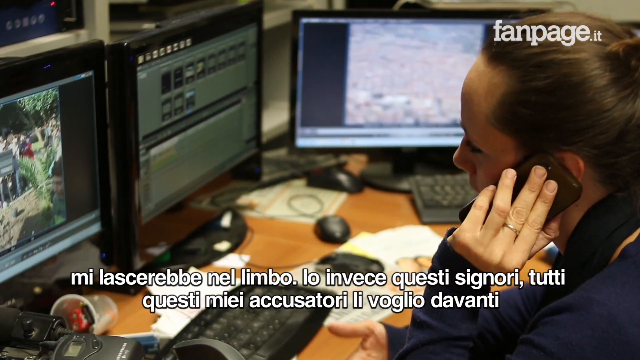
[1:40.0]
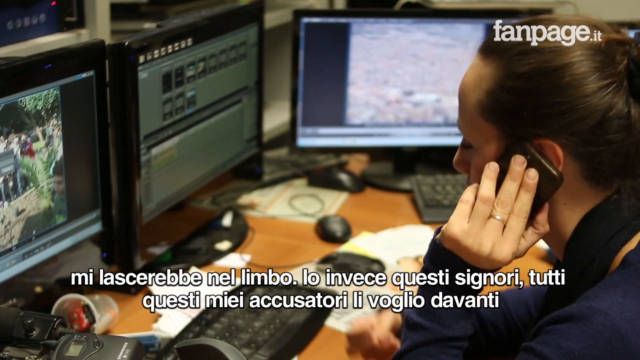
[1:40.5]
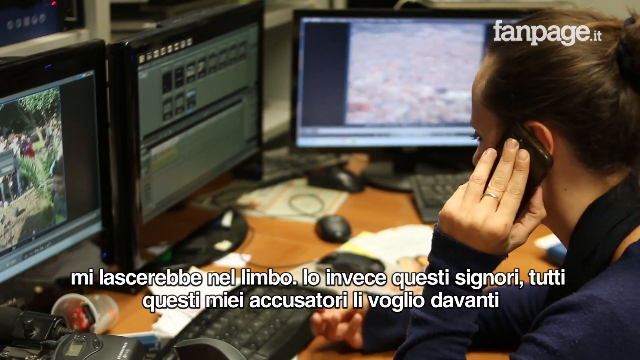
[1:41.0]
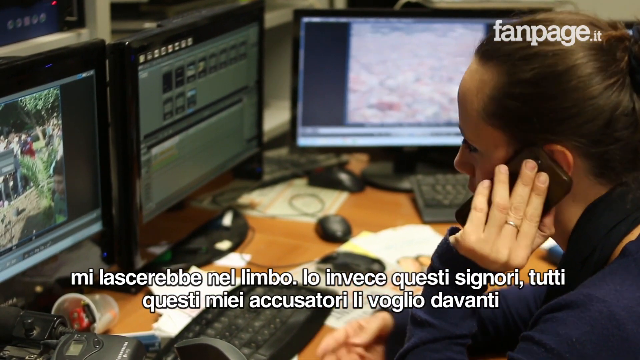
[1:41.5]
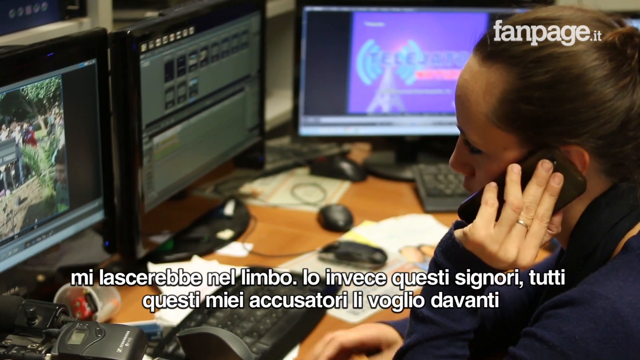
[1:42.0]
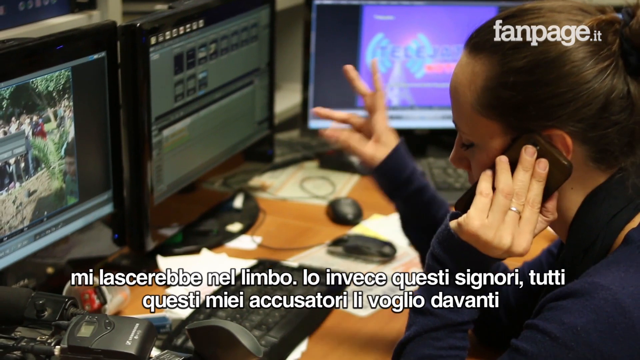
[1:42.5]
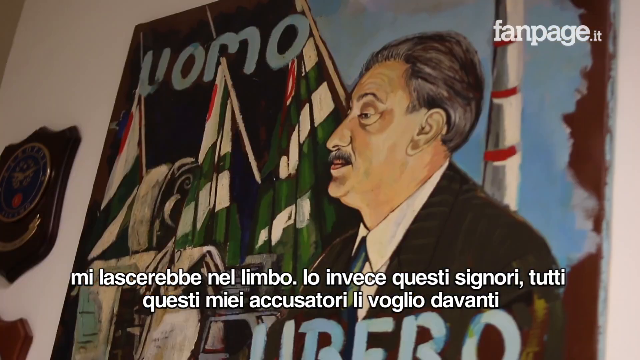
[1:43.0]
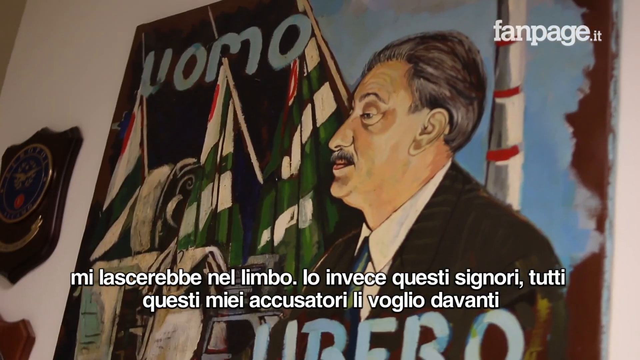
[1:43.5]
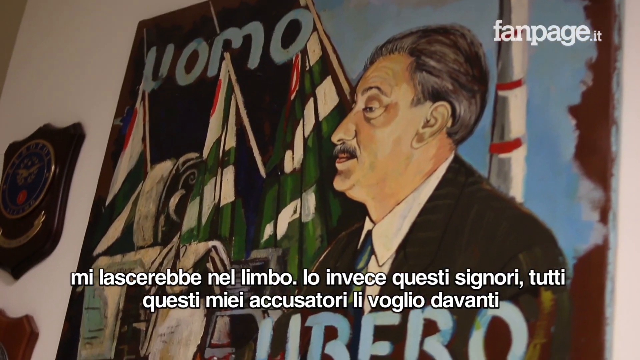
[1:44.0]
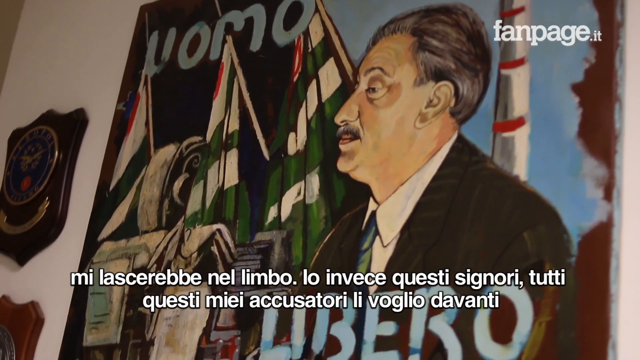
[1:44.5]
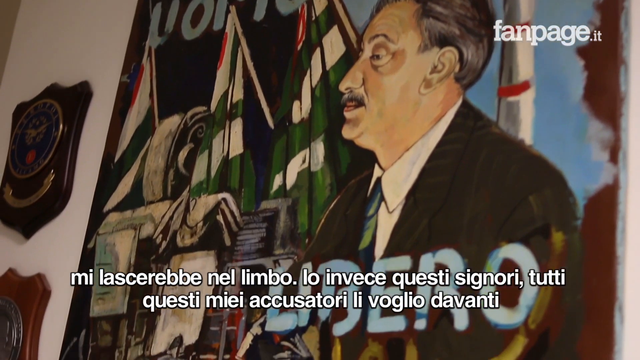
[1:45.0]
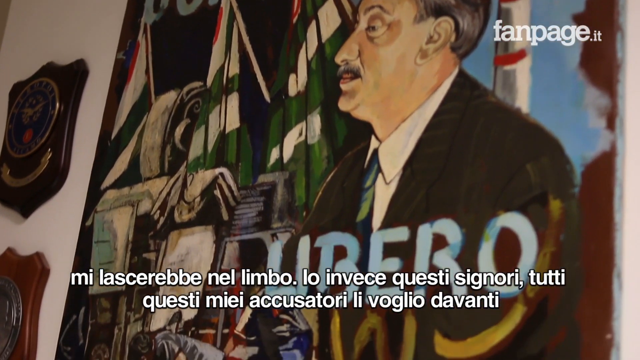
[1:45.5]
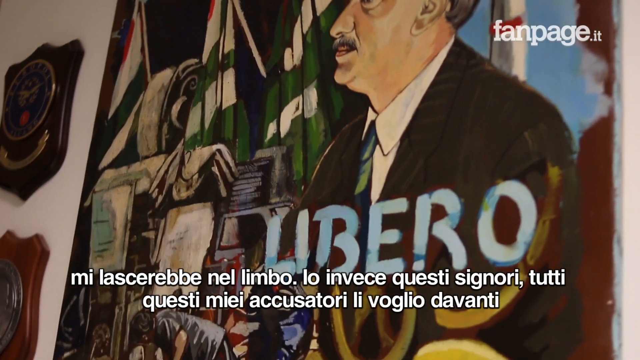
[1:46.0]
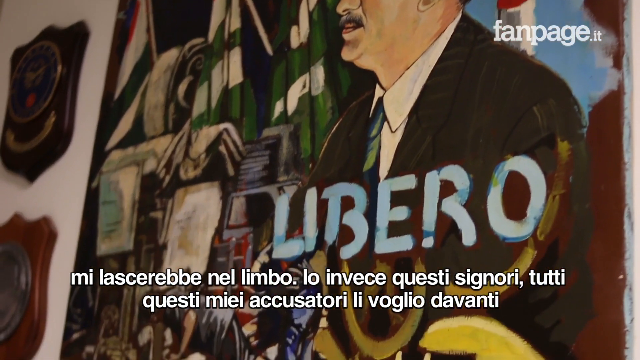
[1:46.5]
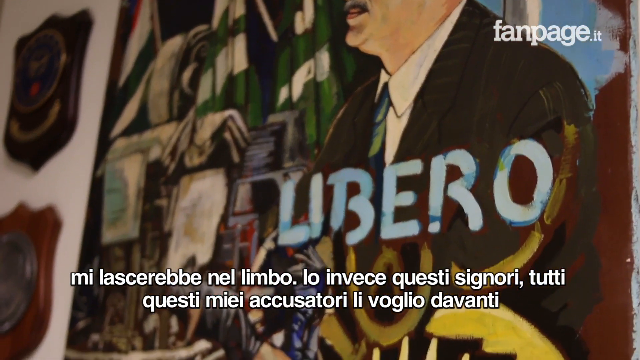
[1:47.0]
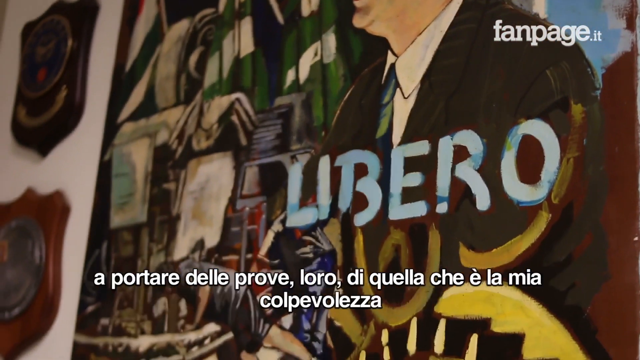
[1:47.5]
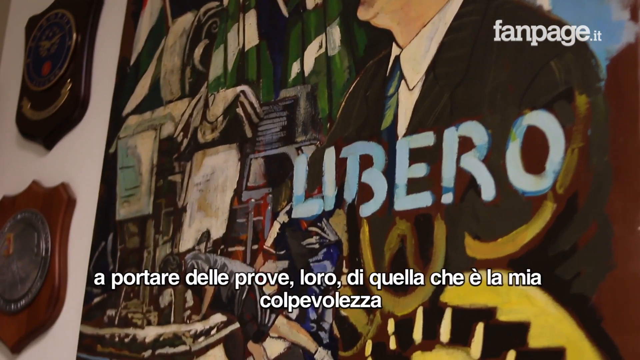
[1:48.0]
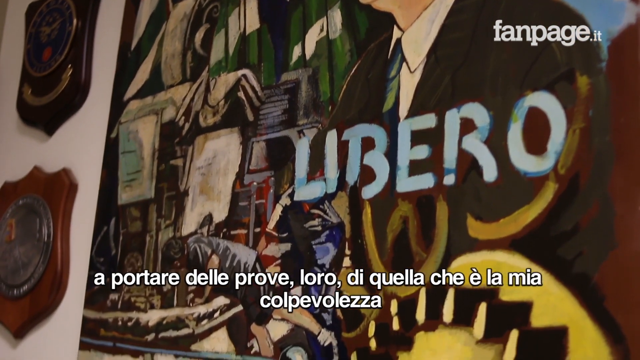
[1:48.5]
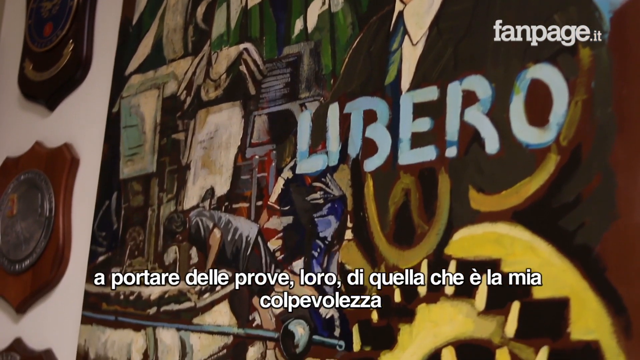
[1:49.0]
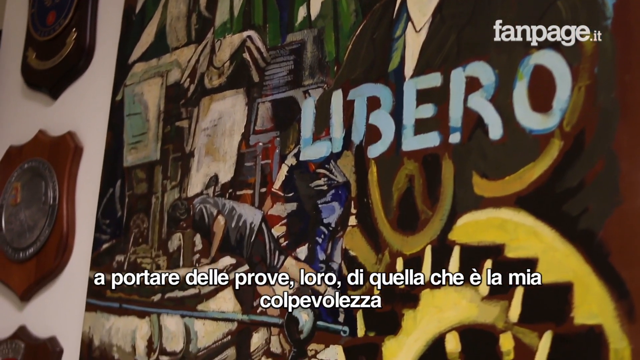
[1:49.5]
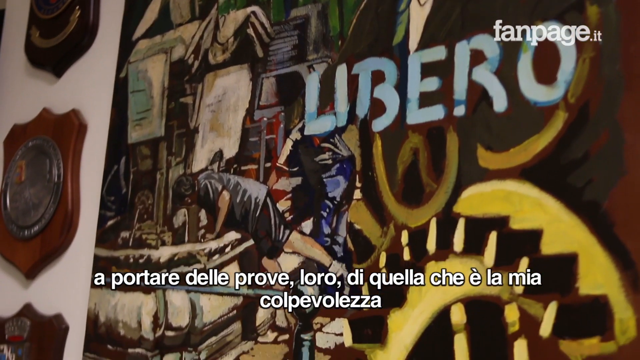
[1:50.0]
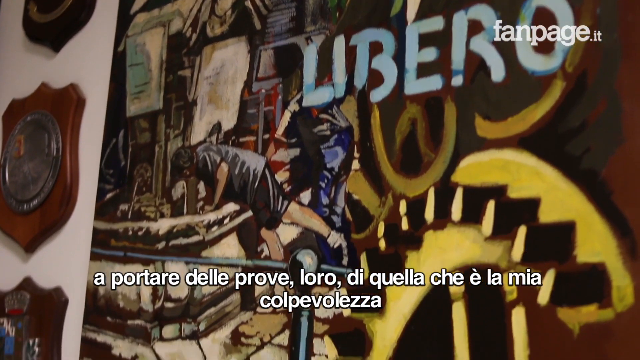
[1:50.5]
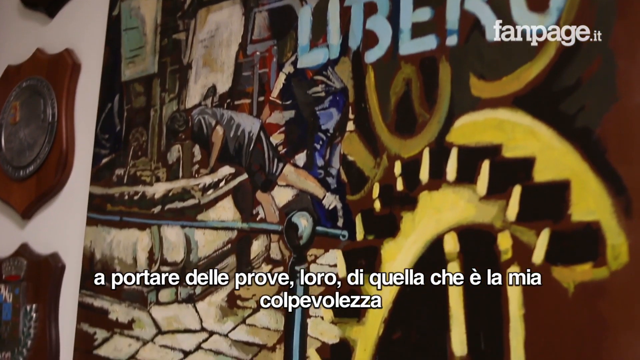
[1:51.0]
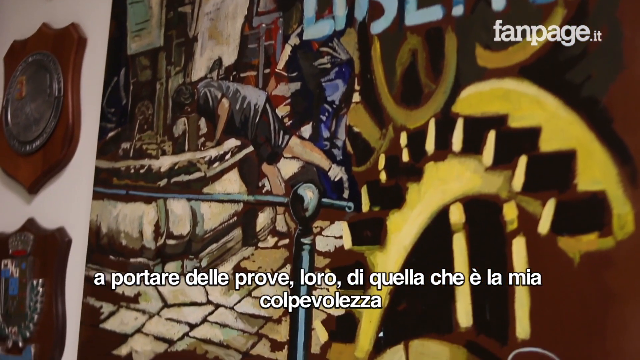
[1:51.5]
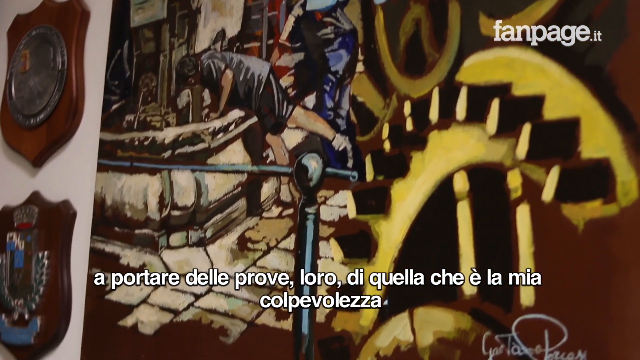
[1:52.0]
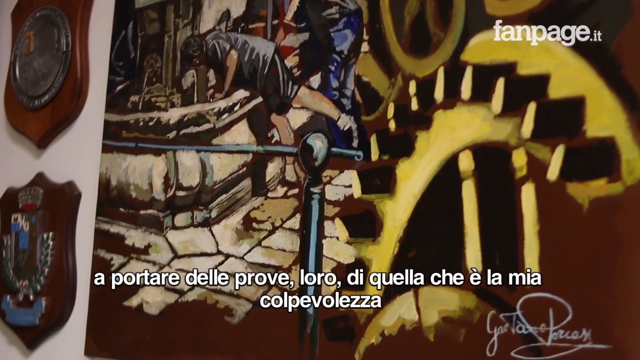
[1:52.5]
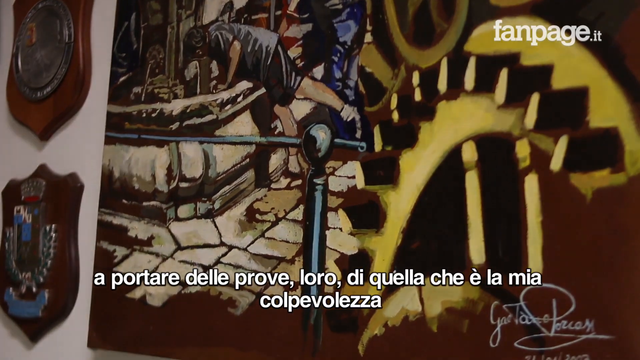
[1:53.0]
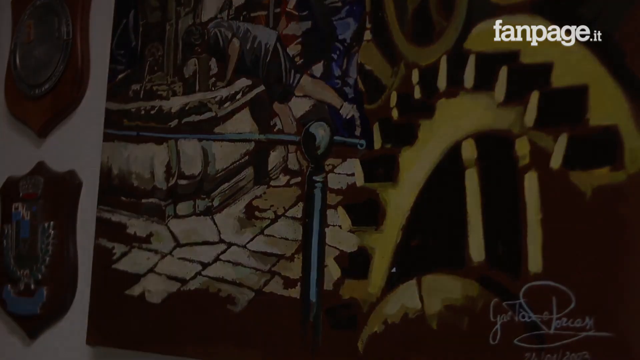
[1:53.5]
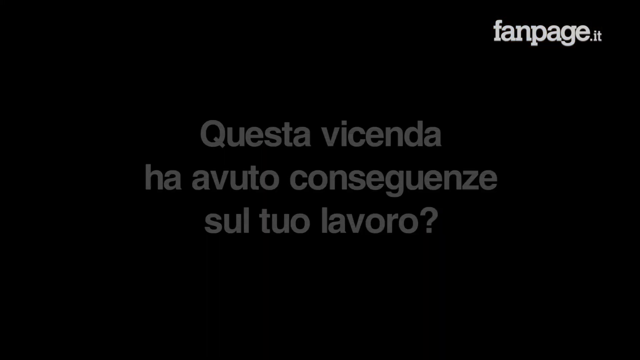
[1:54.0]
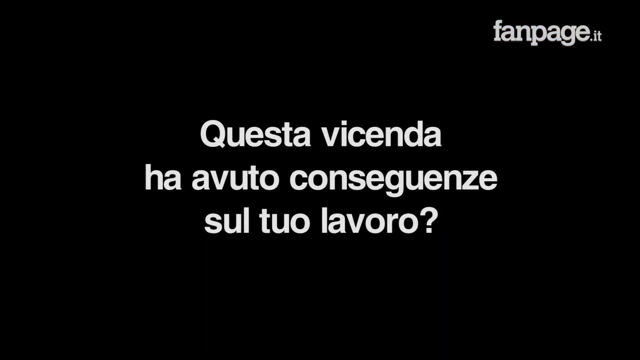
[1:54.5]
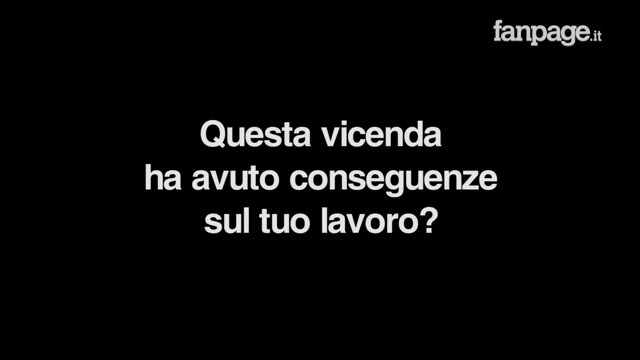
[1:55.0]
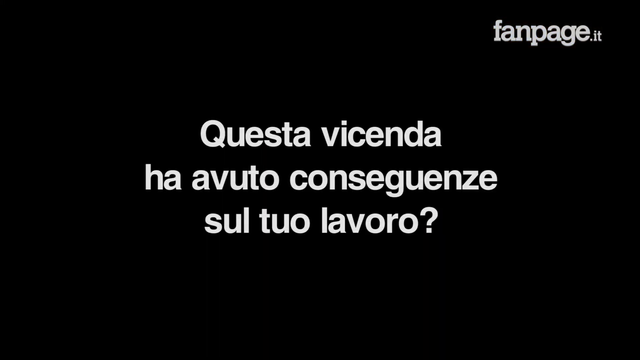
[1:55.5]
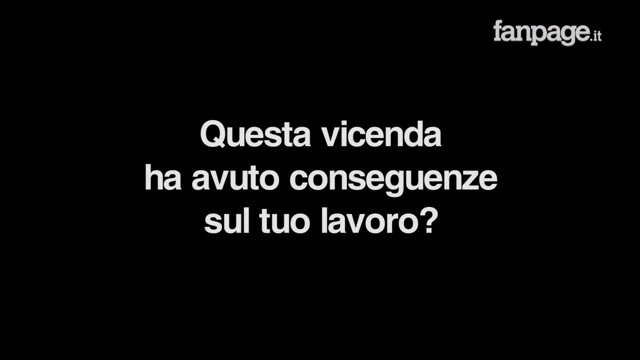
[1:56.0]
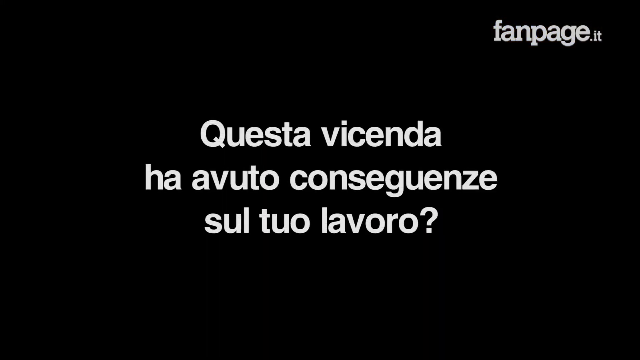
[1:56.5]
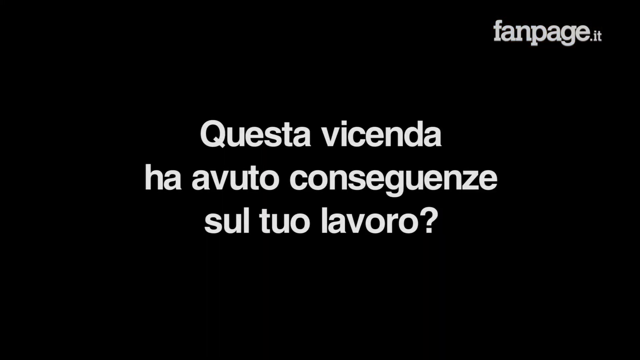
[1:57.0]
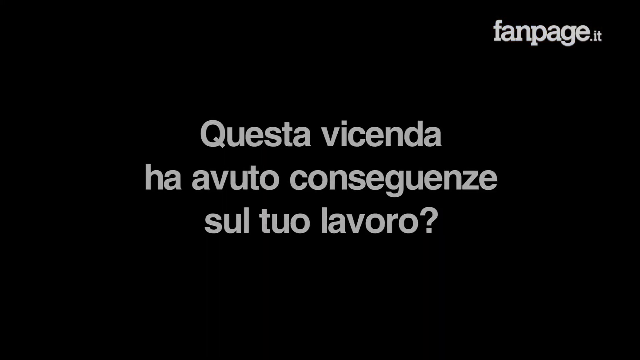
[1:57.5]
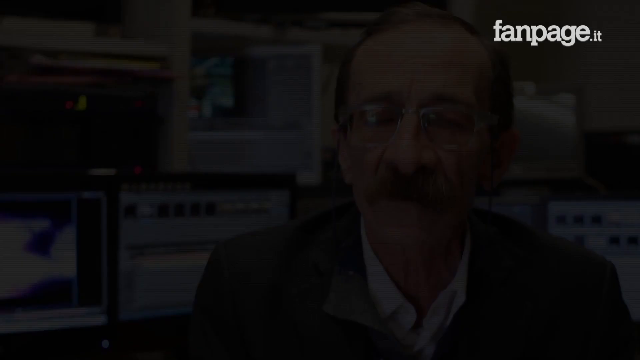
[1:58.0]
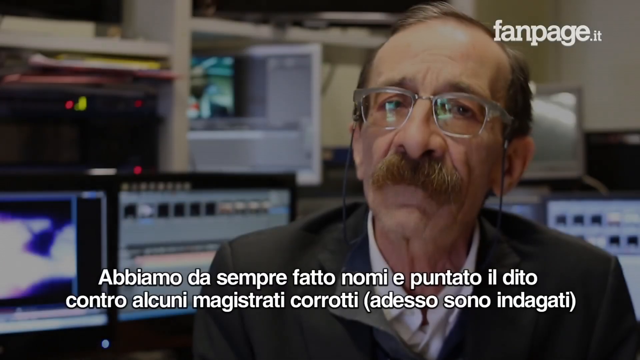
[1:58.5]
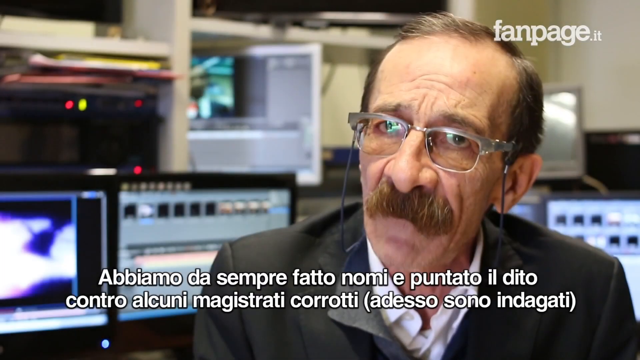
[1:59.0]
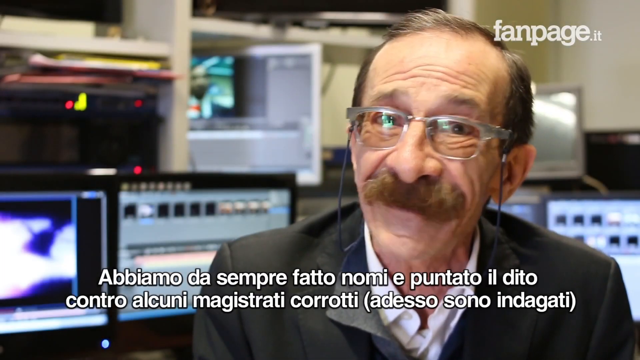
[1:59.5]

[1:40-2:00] The woman is at a computer with three monitors, talking on a mobile phone held in her left hand to her left ear and gesturing with her right hand as she speaks. The next scene shows a painting of a man who looks like a politician, in a suit in front of a background with flags and a chimney. There is Italian text on the painting. The camera pans down, showing other men doing something on the painting. The screen fades to black and a question is written on it in Italian. The old man with a receding hairline, glasses and a distinctive moustache then talks into the camera, moving his head quite a lot in a sort of questioning manner as he looks into the camera, emphasizing his point.